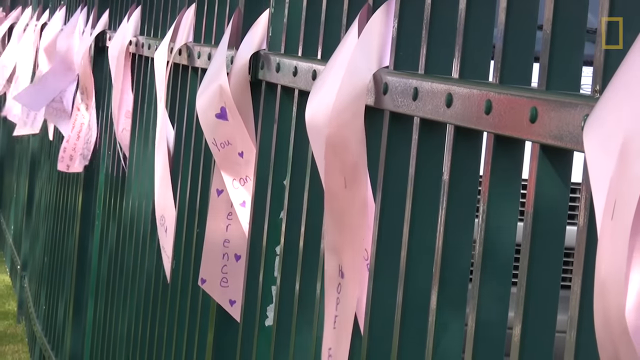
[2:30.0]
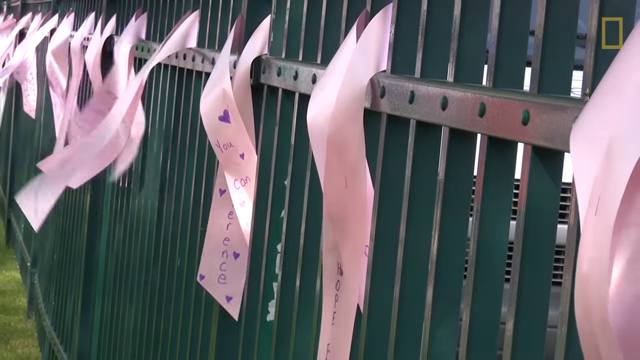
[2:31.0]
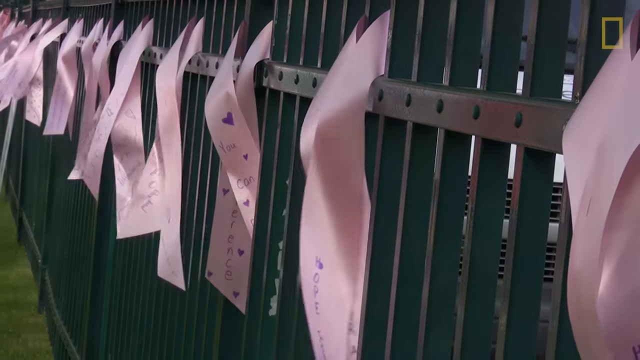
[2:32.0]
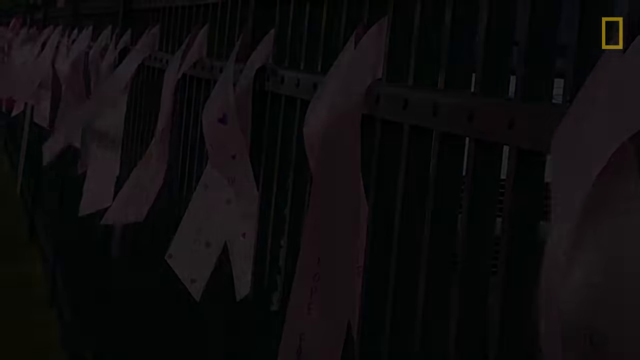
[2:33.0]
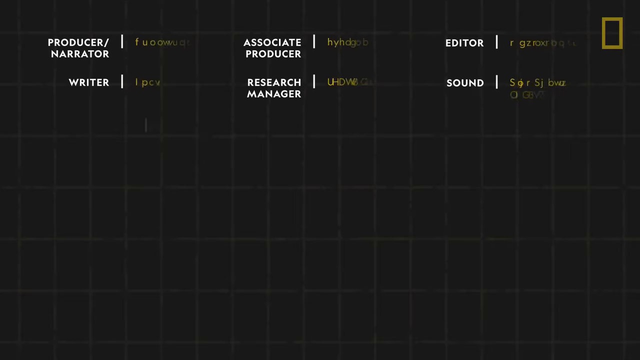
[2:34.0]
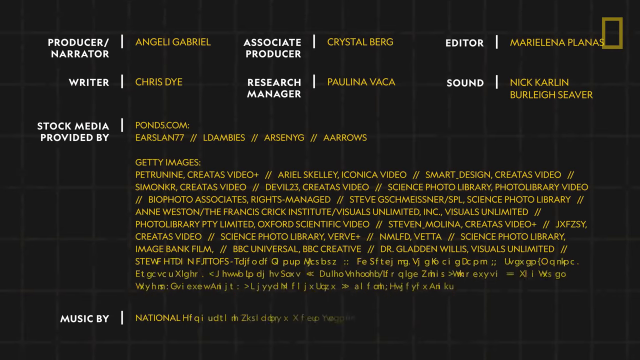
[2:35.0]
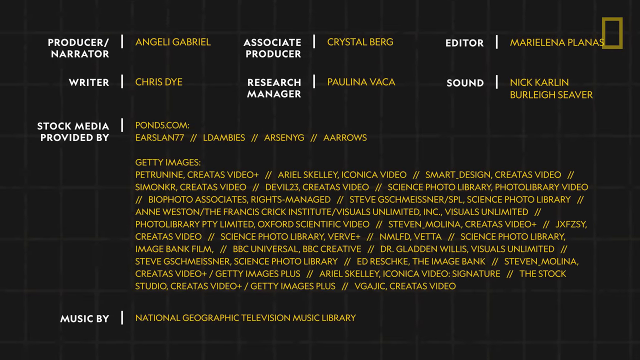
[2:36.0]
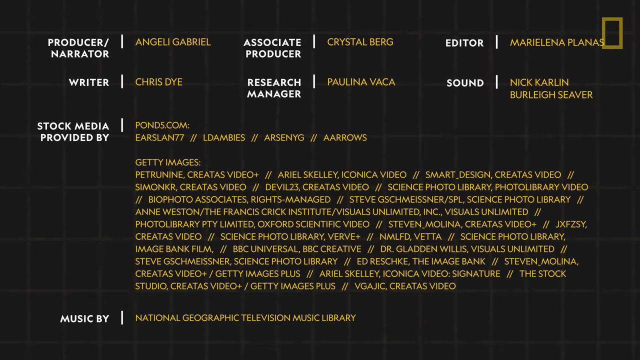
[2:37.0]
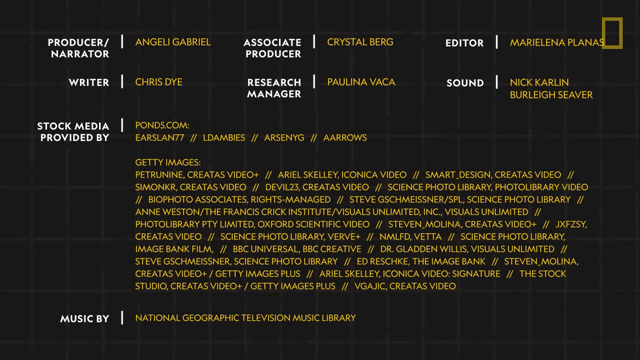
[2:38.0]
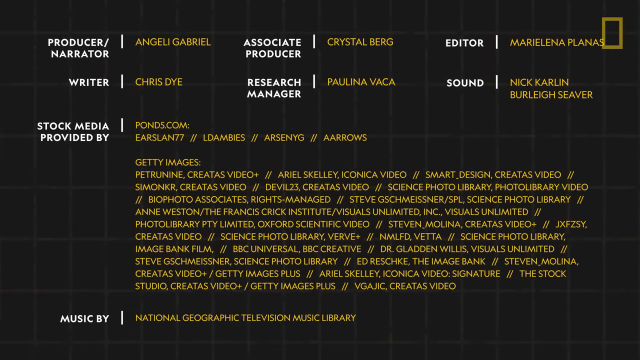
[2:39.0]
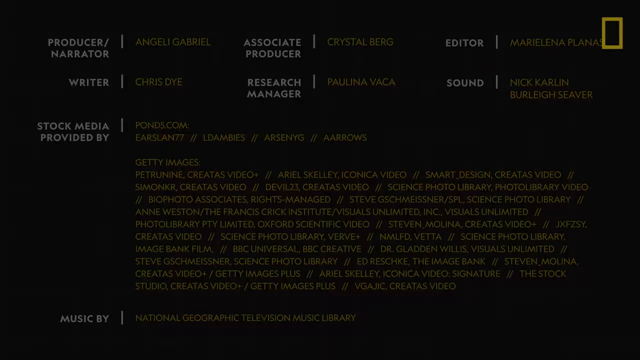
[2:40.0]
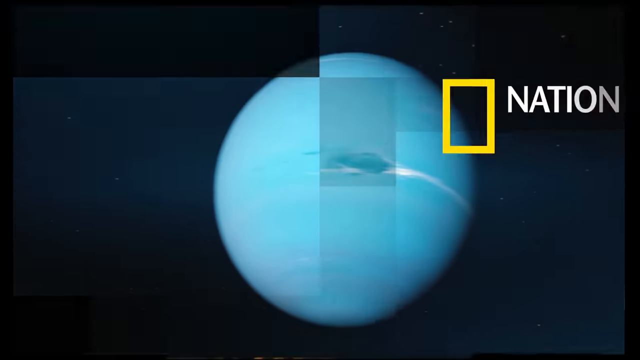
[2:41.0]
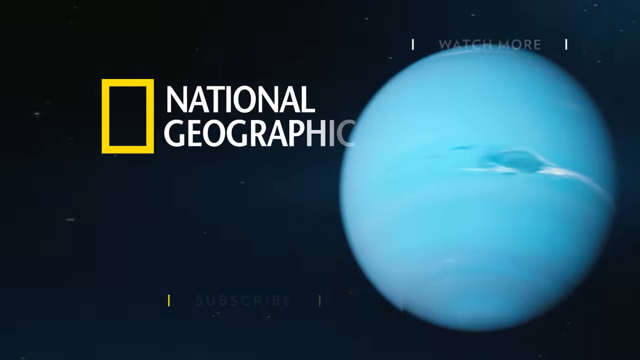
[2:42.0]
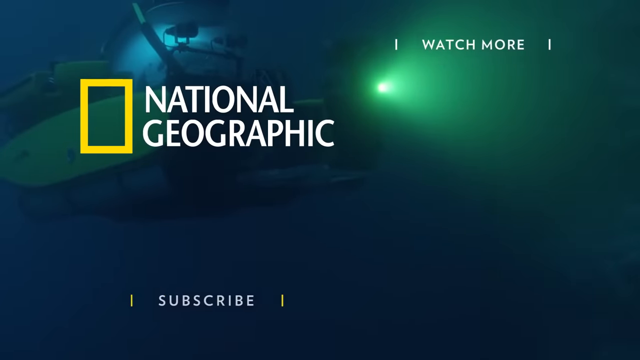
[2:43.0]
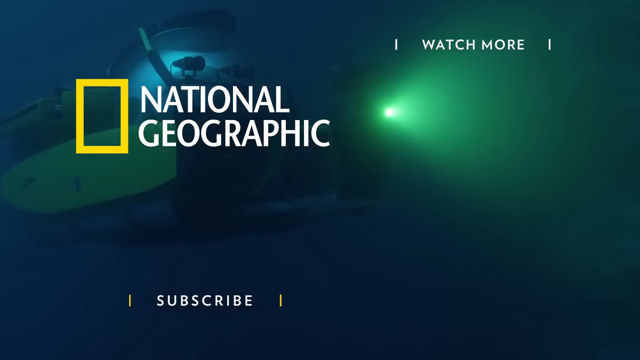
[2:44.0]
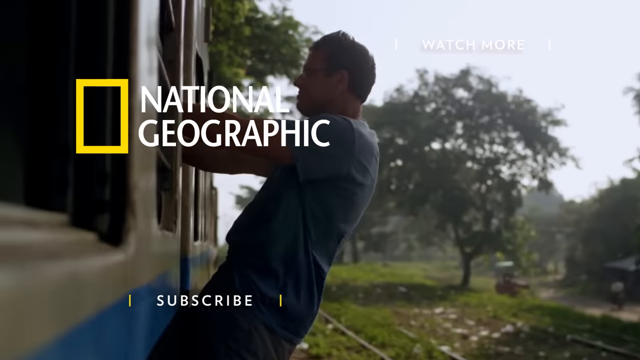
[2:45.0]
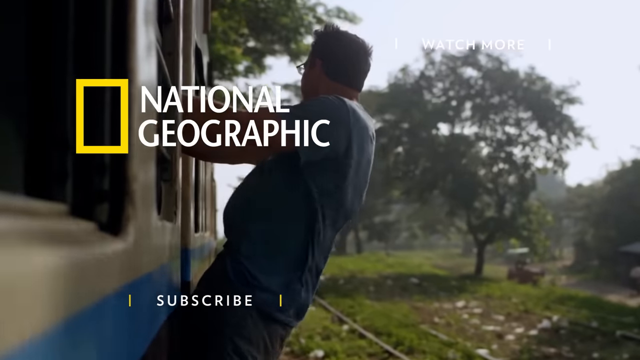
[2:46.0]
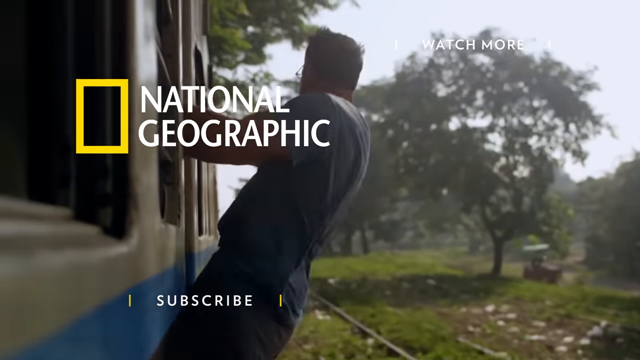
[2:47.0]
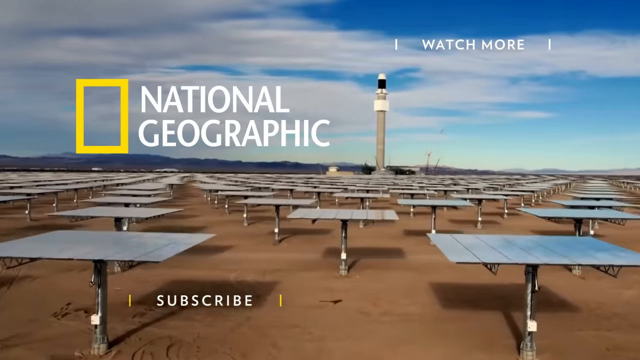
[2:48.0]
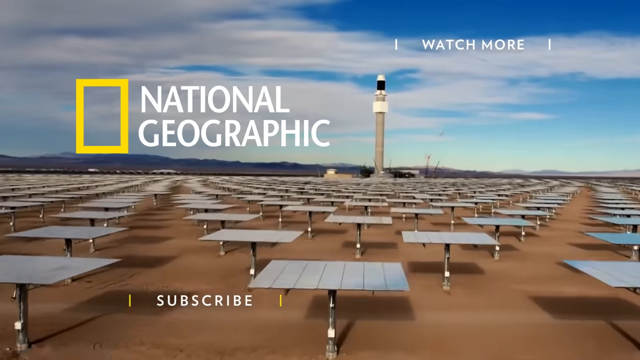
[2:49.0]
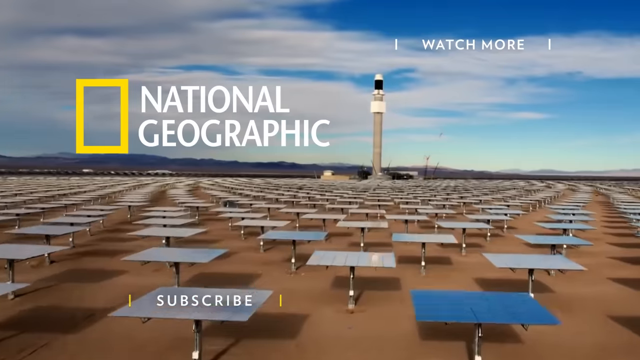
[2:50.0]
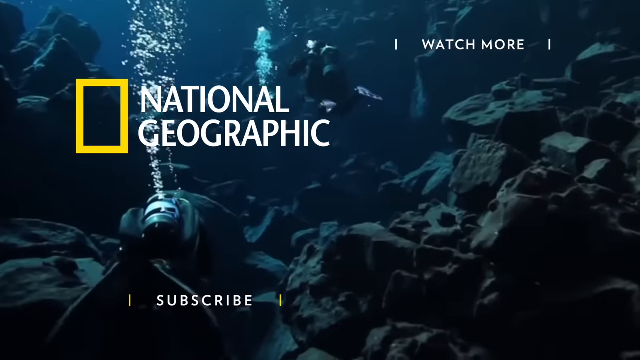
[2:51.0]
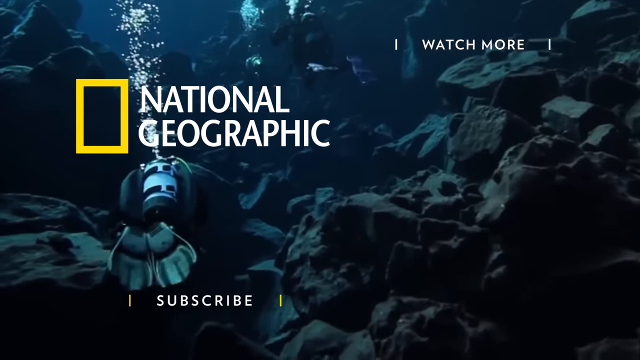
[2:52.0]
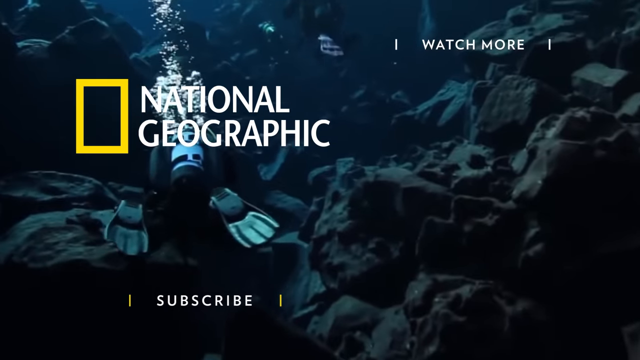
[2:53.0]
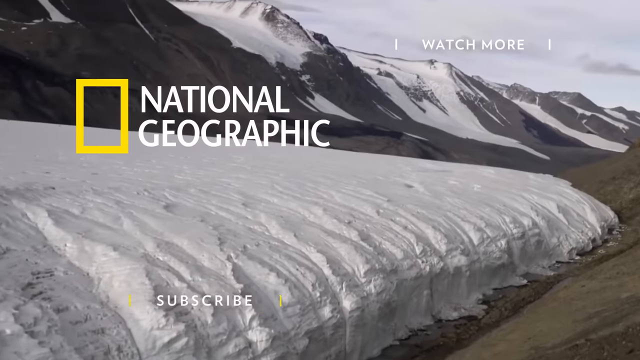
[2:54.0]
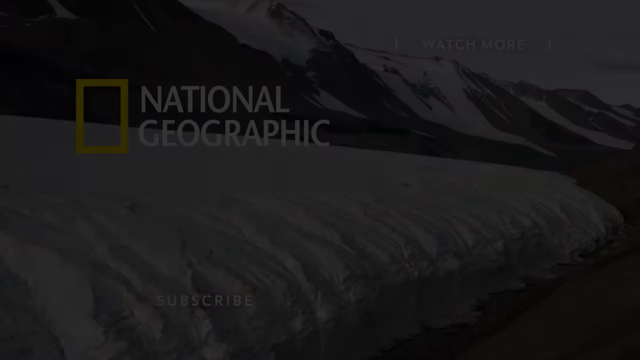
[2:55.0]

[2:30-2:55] A fence appears with pink ribbons tied to it; the ribbons have words on them, possibly in remembrance of loved ones who have died of cancer. The scene shifts to credits listing the producer, associate producer, writer, editor and others, as well as the sources of stock media. Then a red planet moves to the right side, and the text "National Geographic" appears next to a bold yellow rectangle on its left. A series of video clips follows: a submersible moving underwater, a person hanging on the outside of a train, a solar cell array in what looks like a desert climate, scuba divers swimming underwater, and an ice sheet next to a row of mountains.